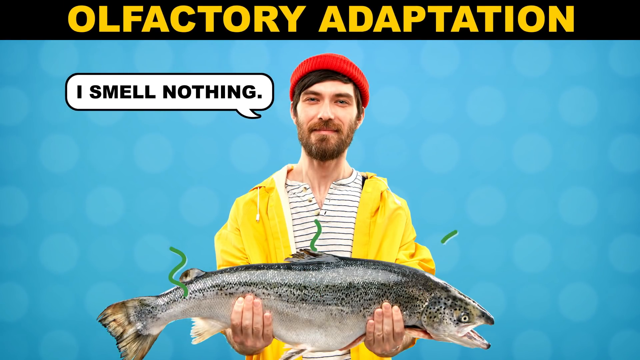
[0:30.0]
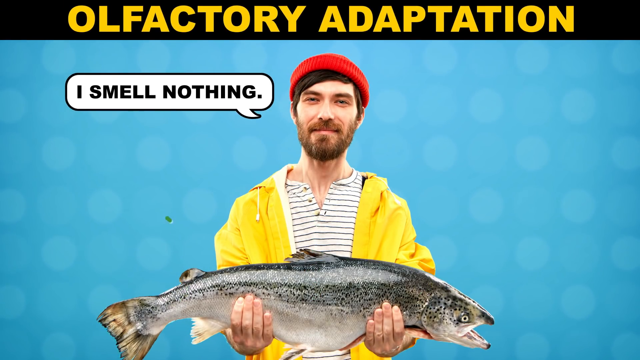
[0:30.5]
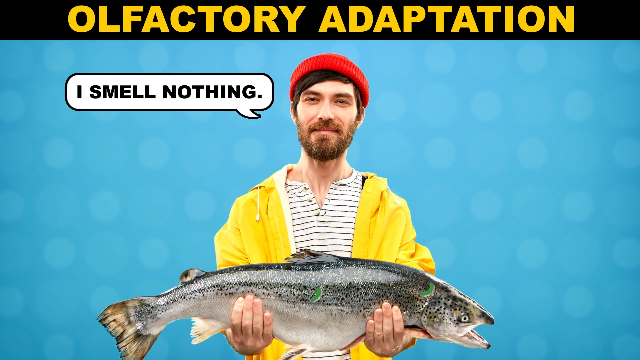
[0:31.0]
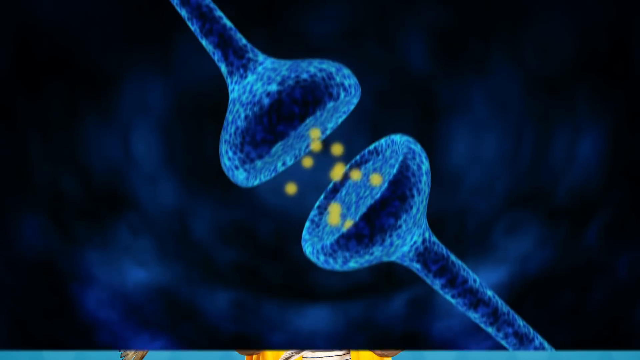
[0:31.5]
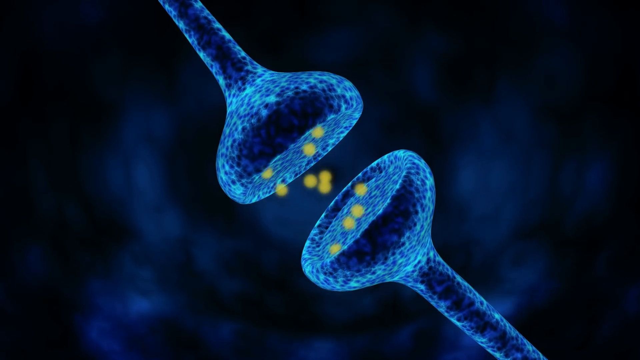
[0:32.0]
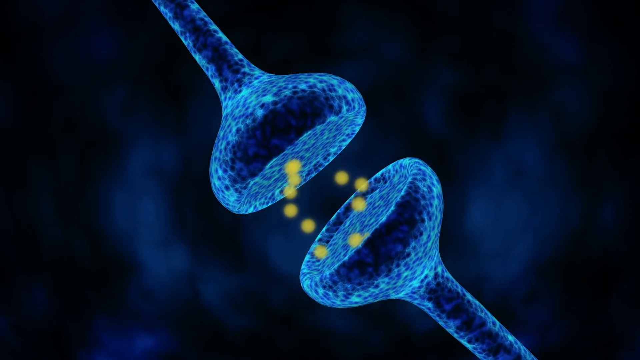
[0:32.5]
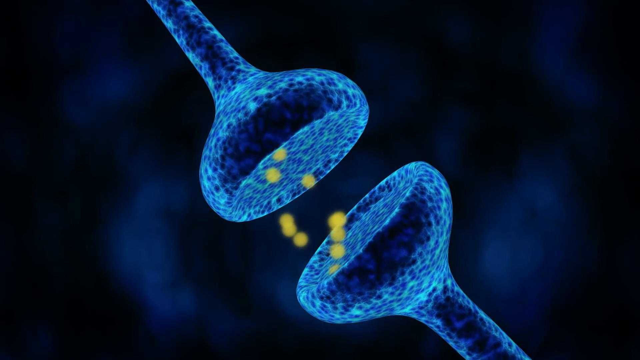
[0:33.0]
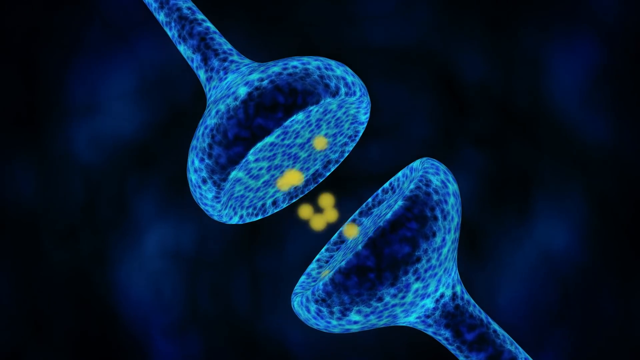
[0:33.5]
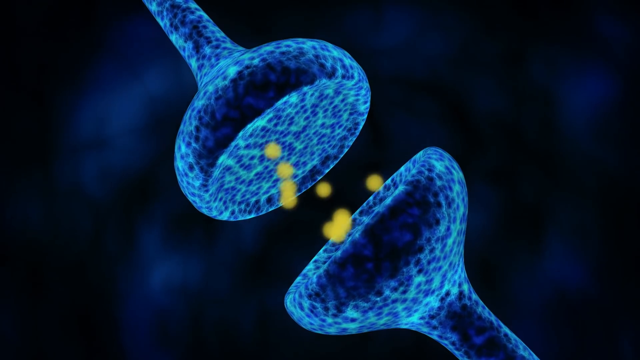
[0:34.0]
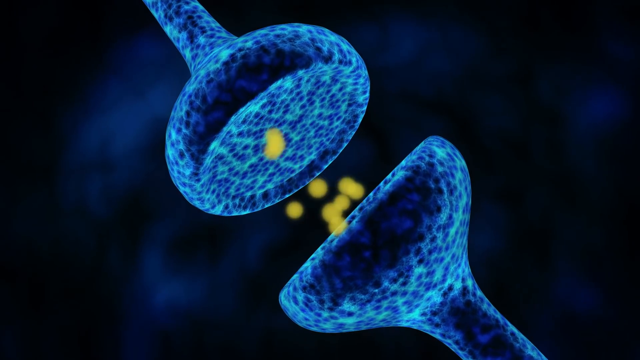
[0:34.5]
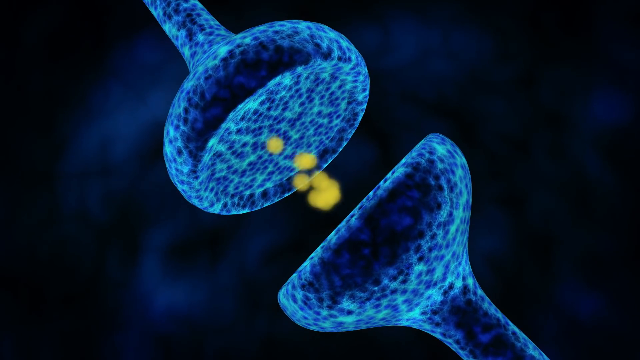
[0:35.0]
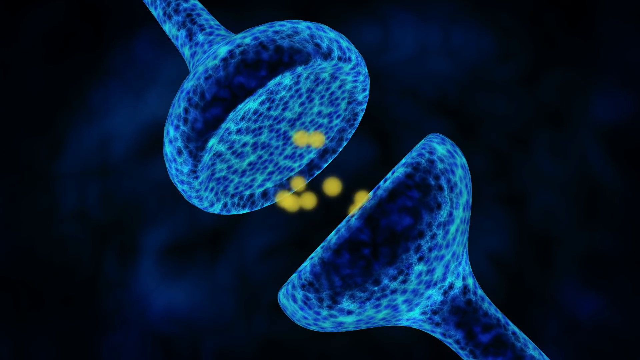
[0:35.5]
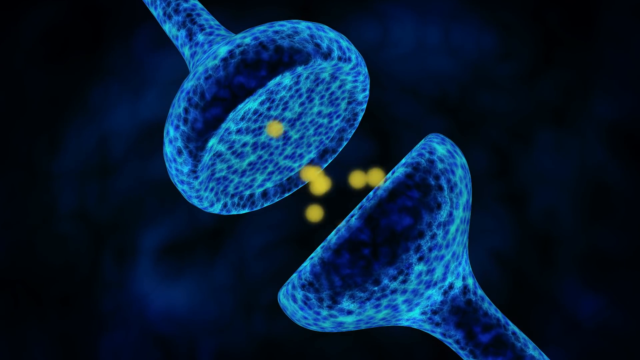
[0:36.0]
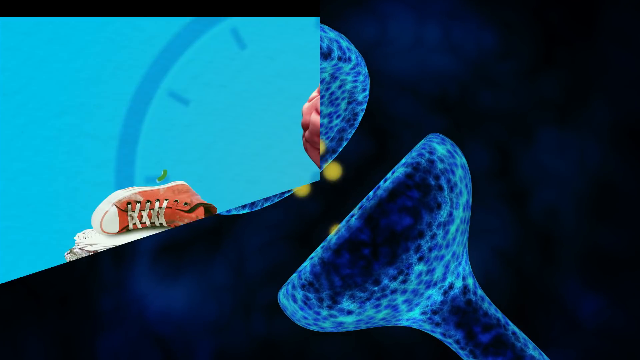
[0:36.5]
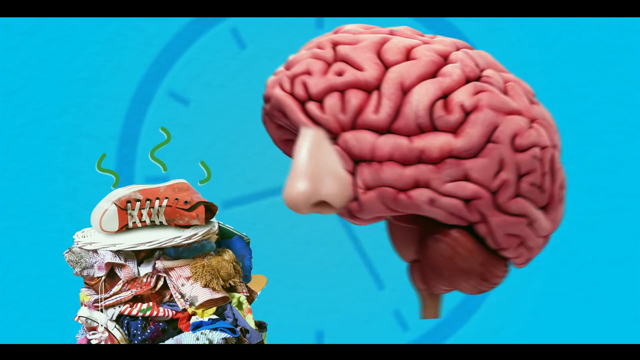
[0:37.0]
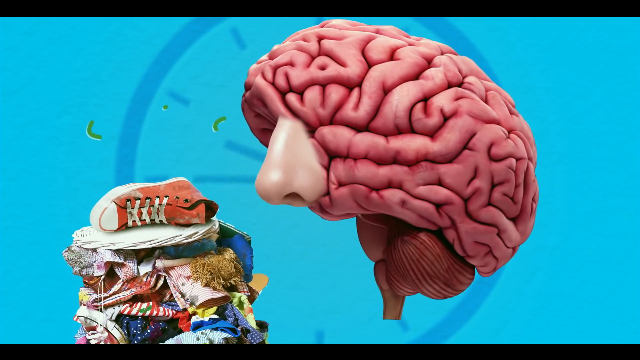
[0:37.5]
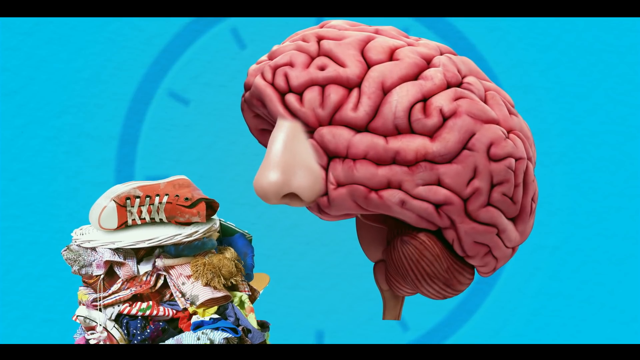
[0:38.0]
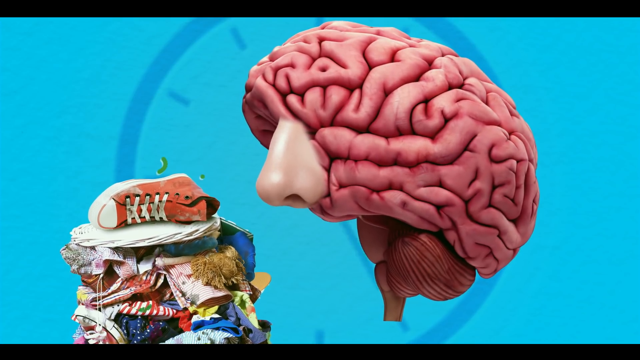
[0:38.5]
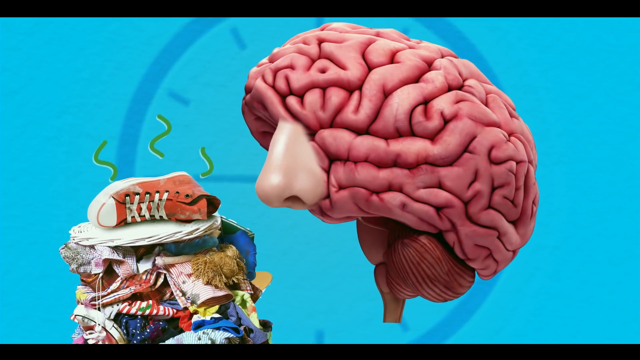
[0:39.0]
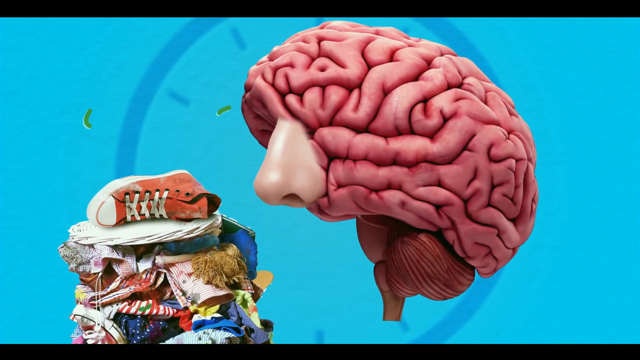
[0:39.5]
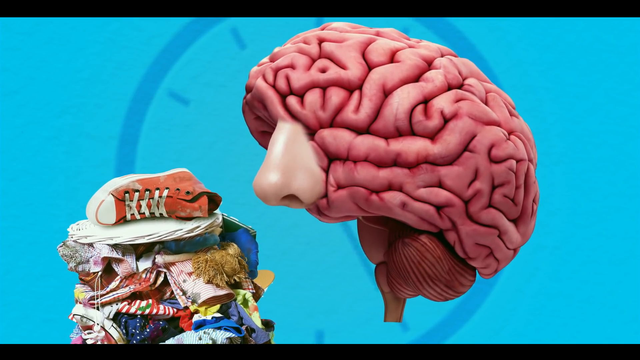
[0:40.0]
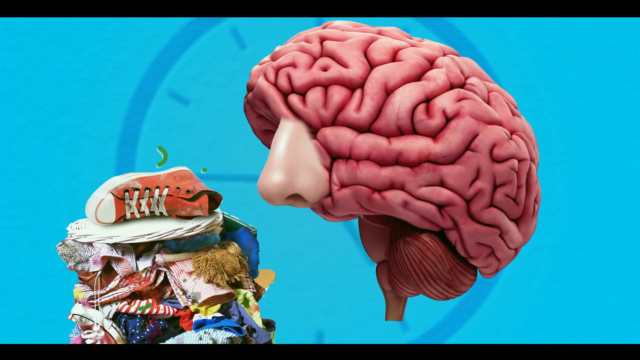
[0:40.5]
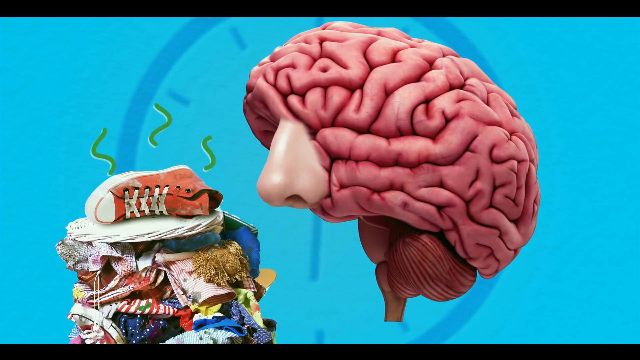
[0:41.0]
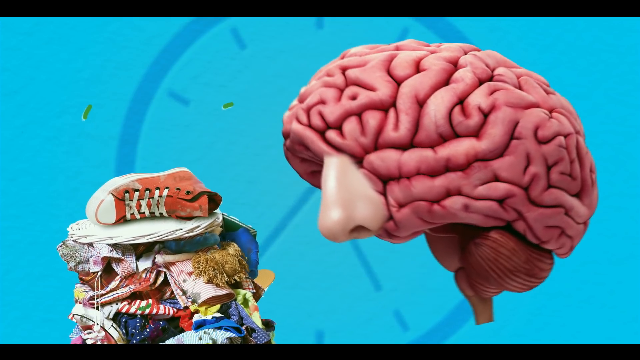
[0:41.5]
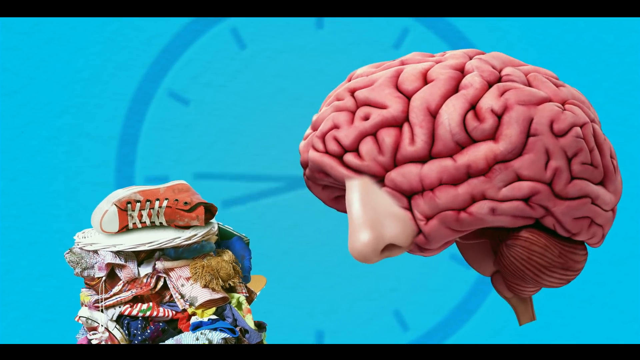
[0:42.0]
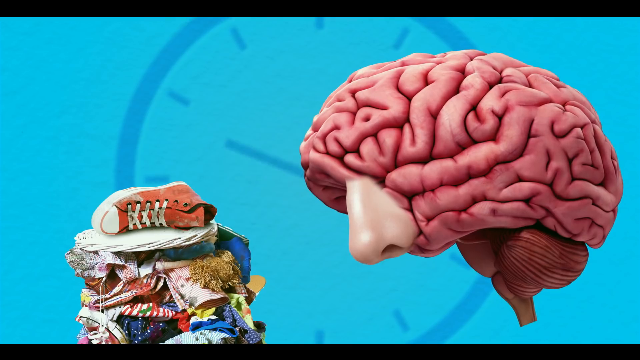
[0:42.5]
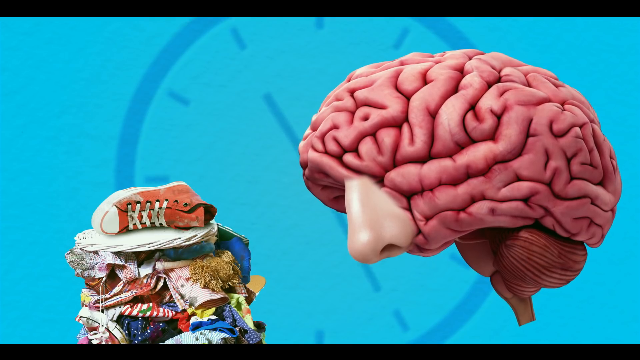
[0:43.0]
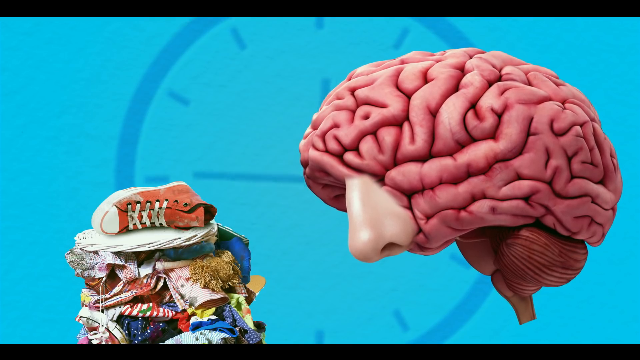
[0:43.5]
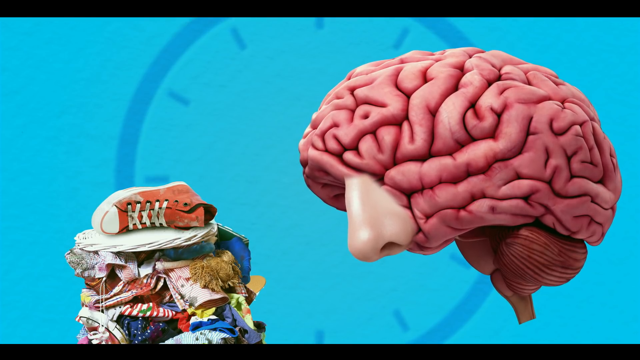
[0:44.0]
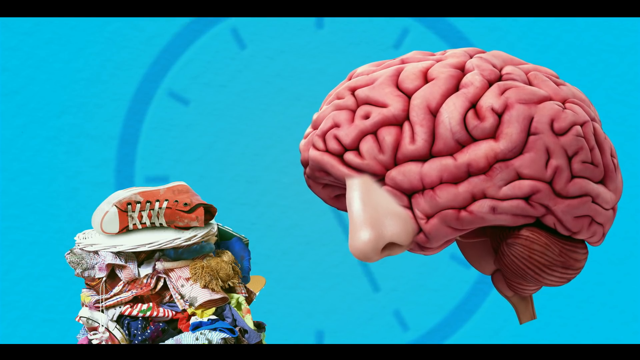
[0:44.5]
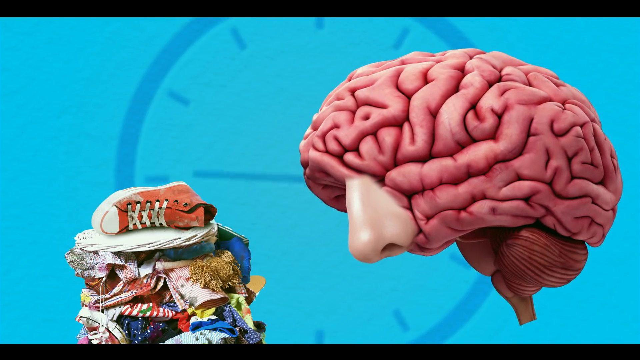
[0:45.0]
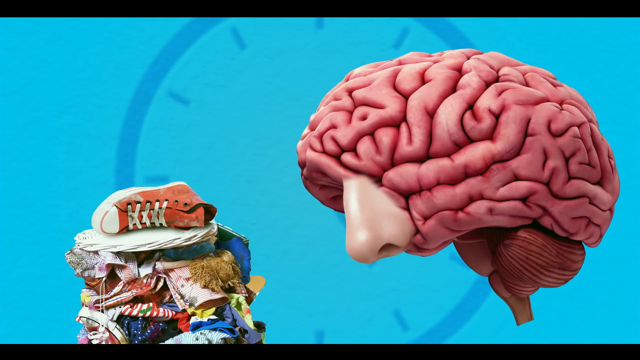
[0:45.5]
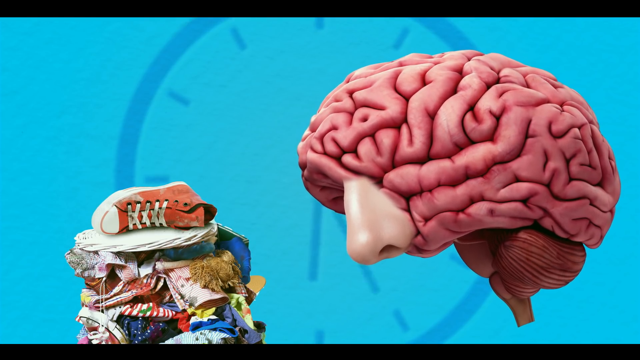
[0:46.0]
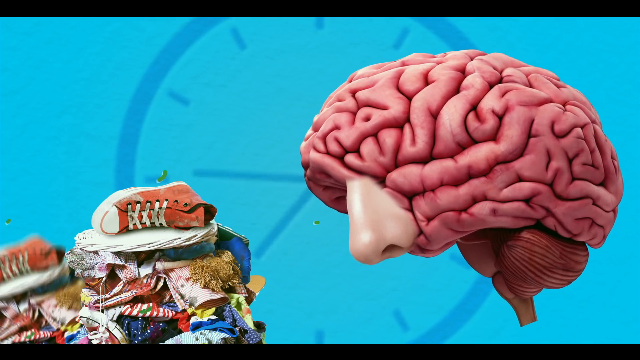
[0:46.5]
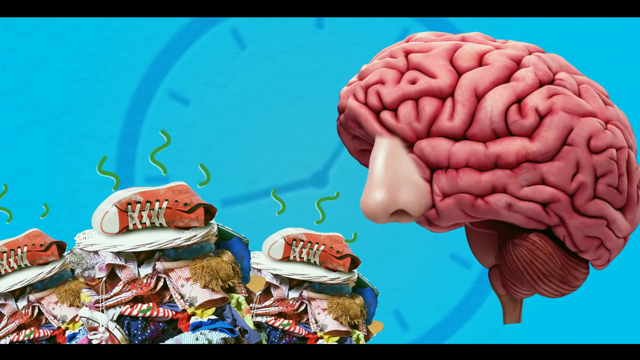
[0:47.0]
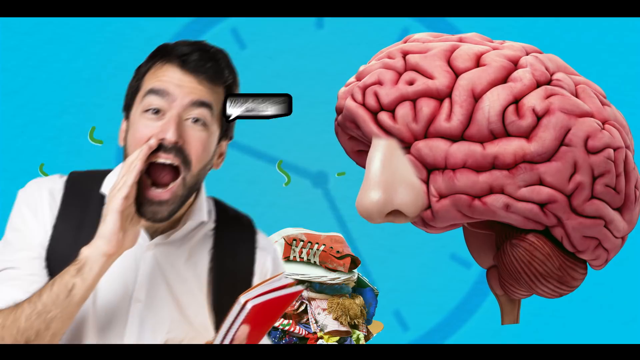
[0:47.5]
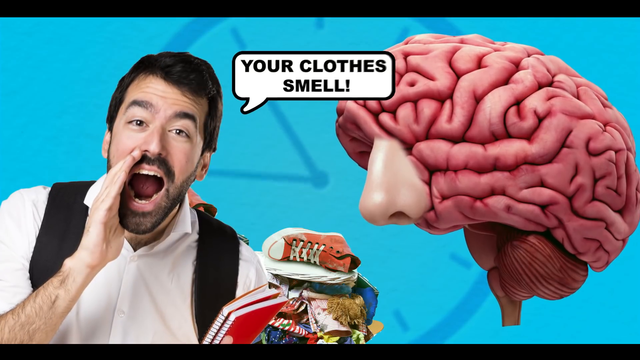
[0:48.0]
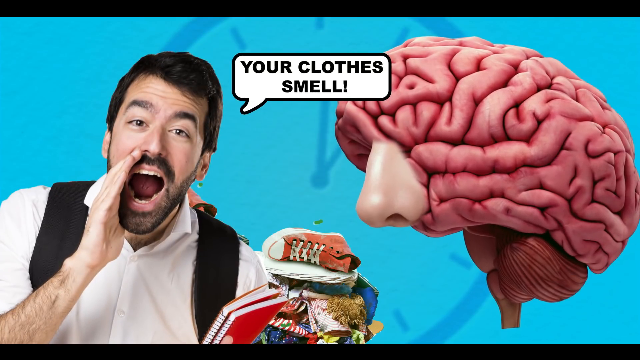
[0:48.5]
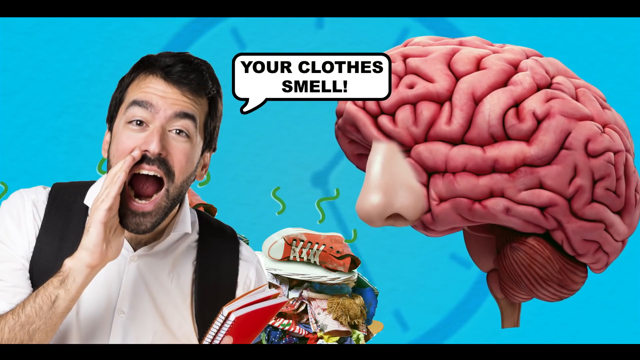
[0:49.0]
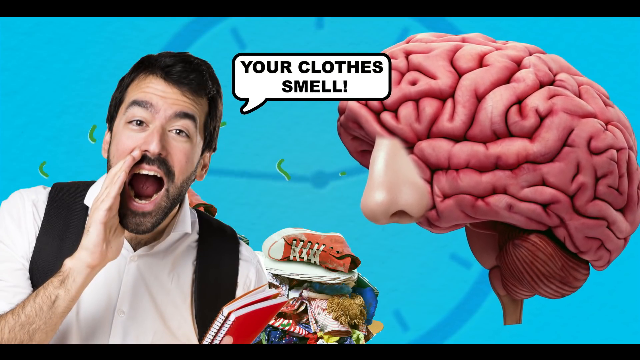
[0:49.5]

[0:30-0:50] The view changes to a picture of two features that are probably meant to be parts of the nose, with little orange circles moving from one to the other. The background is black with some blue, fog-like material, and the camera zooms in on these two blue and black features. They kind of look like golf tees, and they are covered with blue and black designs, with lots of circles. The screen then changes to a large brain with a nose next to a pile of very stinky items, such as a dirty shoe. The brain's nose sniffs at the pile, and green squiggly lines move up from the pile to indicate a bad smell. In the background is the outline of a clock whose hands move to show time passing, and as time passes the brain with the nose scoots back away from the pile of dirty things. More piles appear, along with a man wearing a backpack, and a text box says "Your clothes smell."